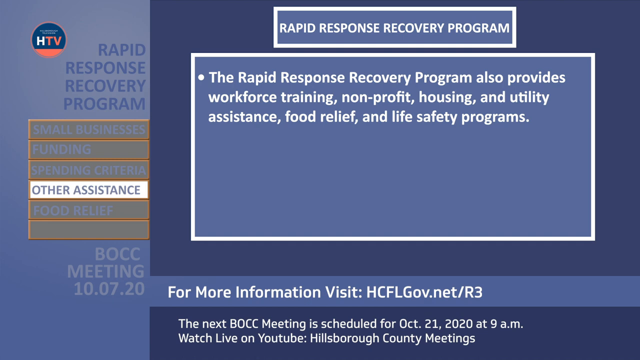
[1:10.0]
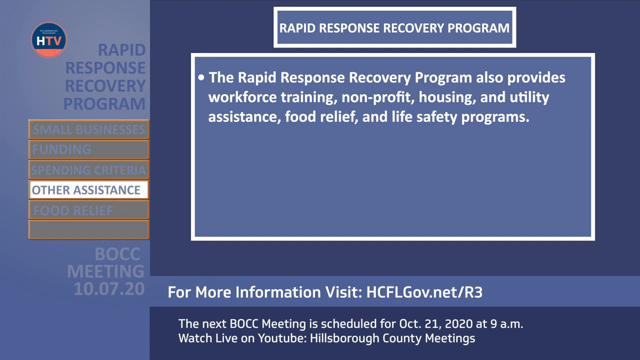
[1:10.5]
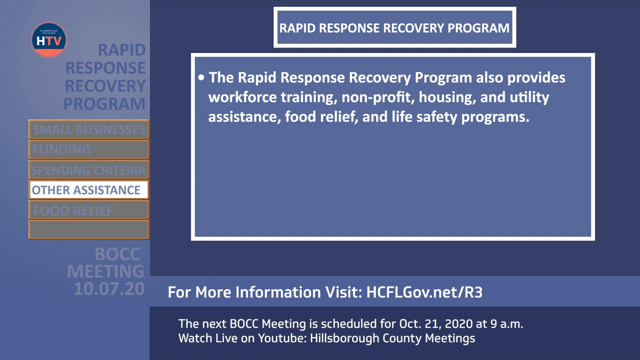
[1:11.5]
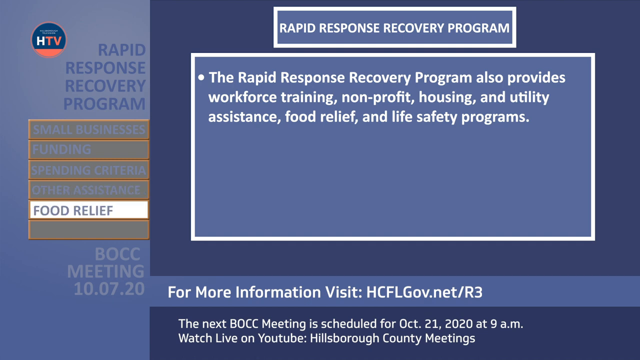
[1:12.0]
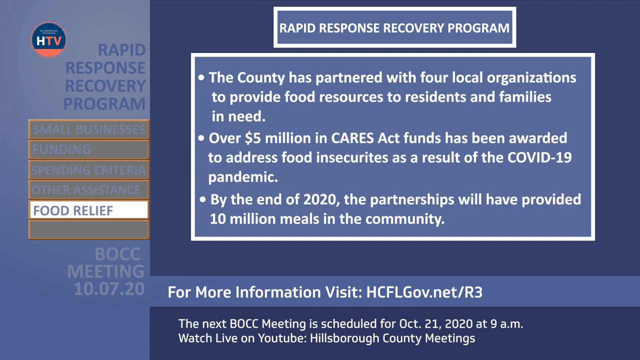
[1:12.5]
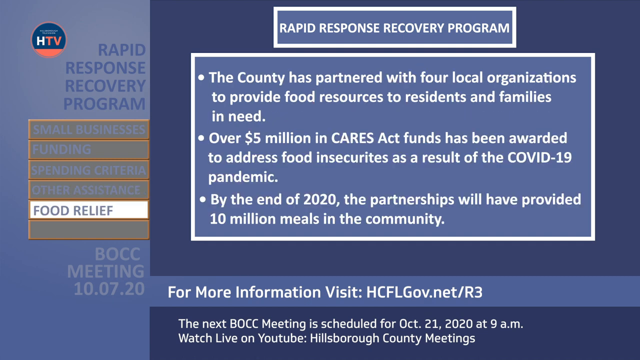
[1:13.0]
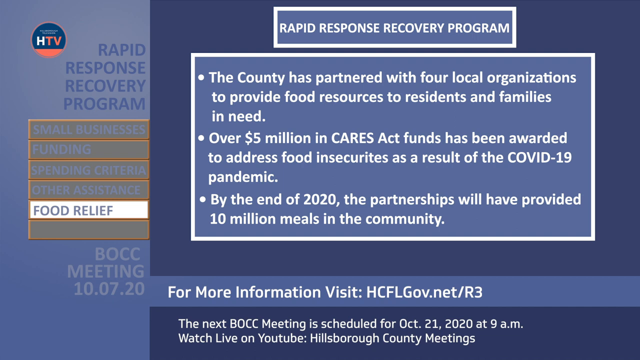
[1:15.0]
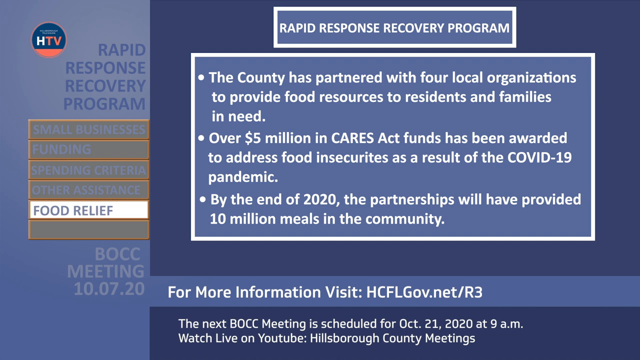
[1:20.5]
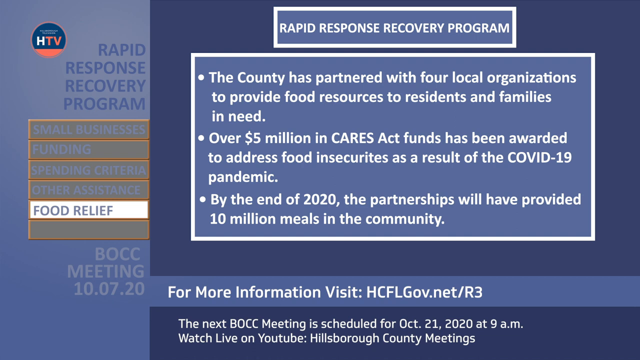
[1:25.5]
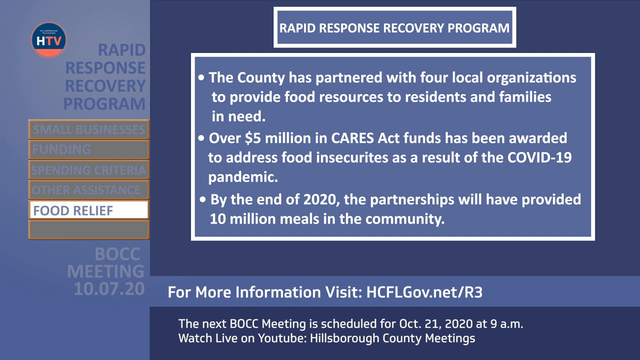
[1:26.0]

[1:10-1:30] The highlighted section on the left changes from other assistance to food relief, moving down the list. At the top right, the same title says "Rapid Response Recovery Program" in a blue box with a white border. Below it are three bullet points in white lettering: "the county has partnered with four local organizations to provide food sources to residents and families in need", "over $5 million in CARES Act funds have been awarded to address food insecurities as a result of the COVID-19 pandemic", and "by the end of 2020, the partnerships will have provided 10 million meals in the community." Someone is possibly talking over these points. Graphics at the bottom and on the left show the current meeting, a website for more information, and information on the next VOCC meeting, which looks to be October 21st, 2020 at 9 a.m., and that it can be watched on YouTube.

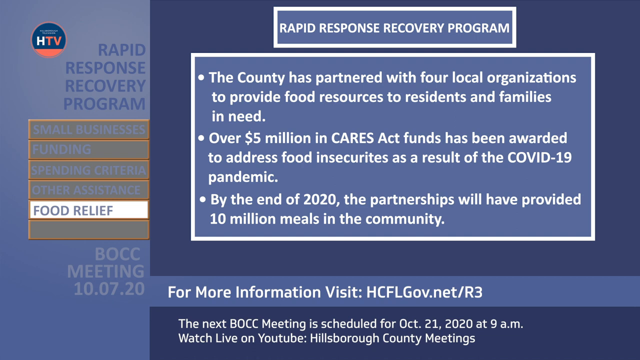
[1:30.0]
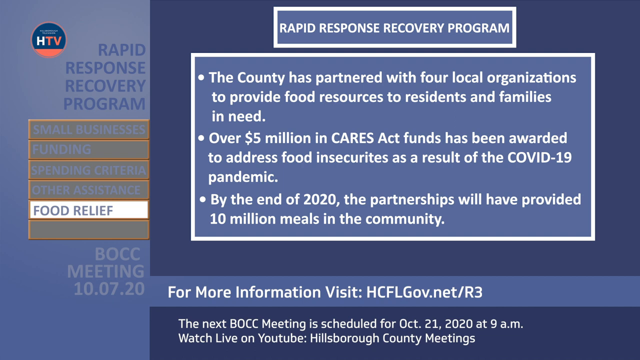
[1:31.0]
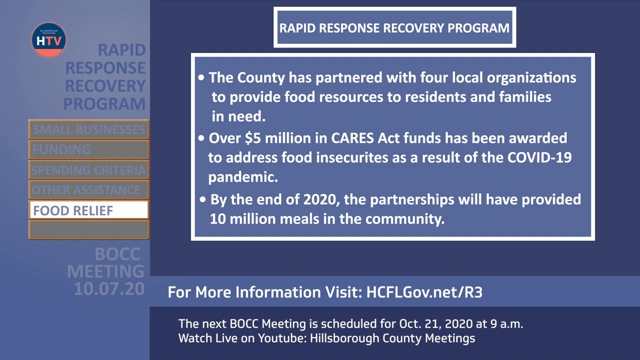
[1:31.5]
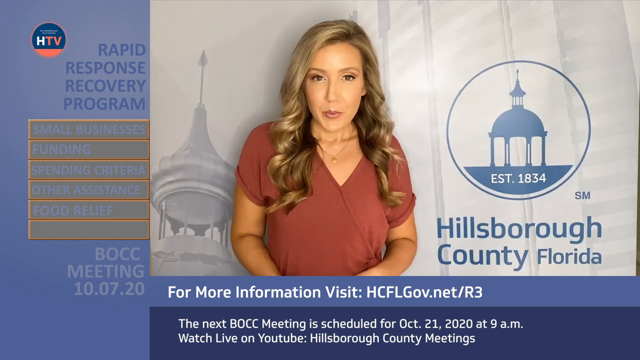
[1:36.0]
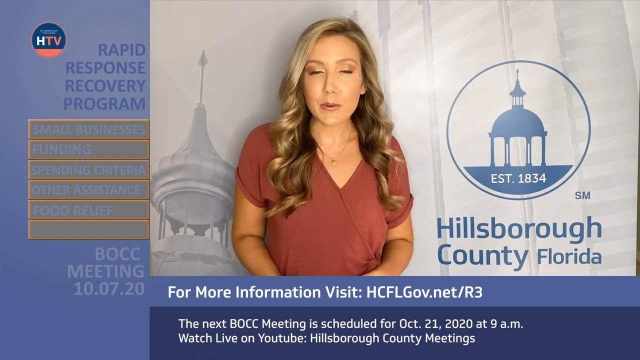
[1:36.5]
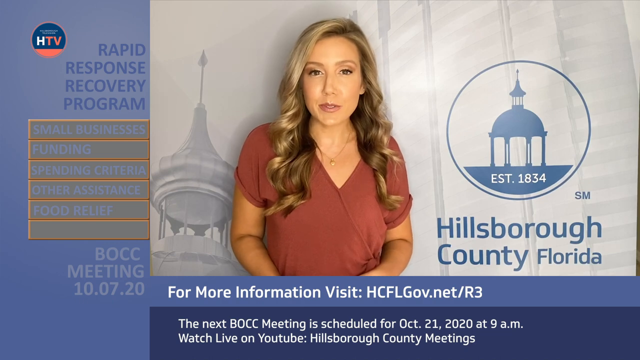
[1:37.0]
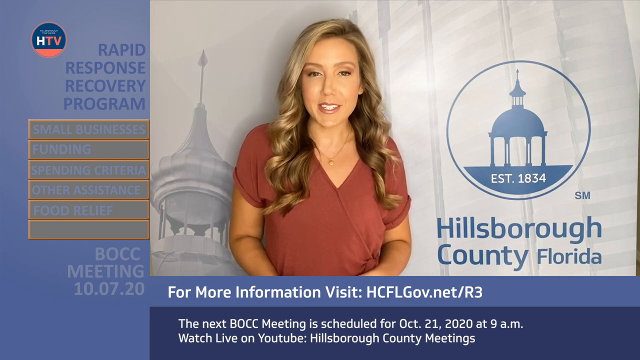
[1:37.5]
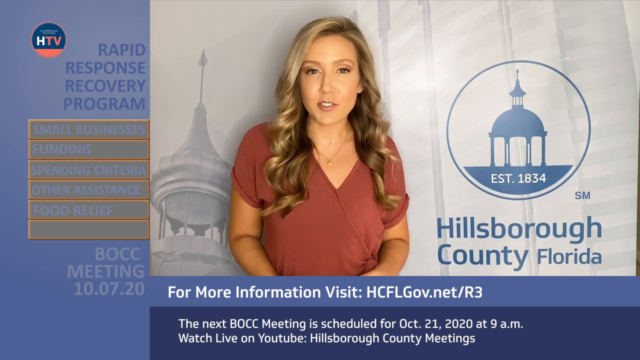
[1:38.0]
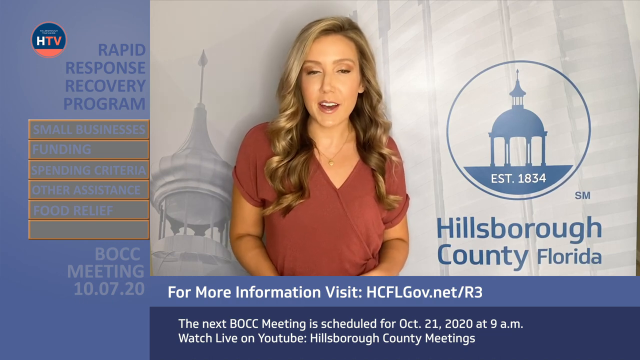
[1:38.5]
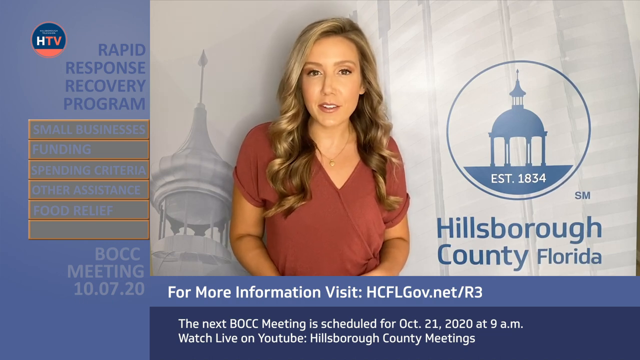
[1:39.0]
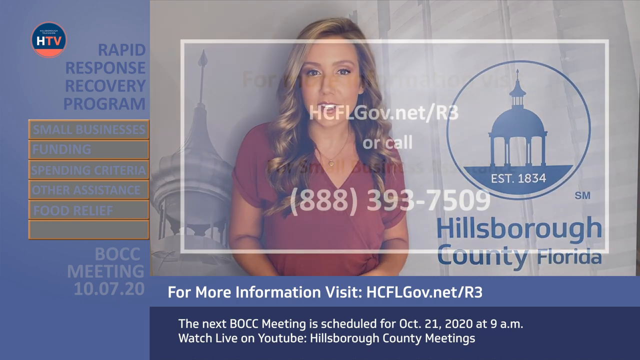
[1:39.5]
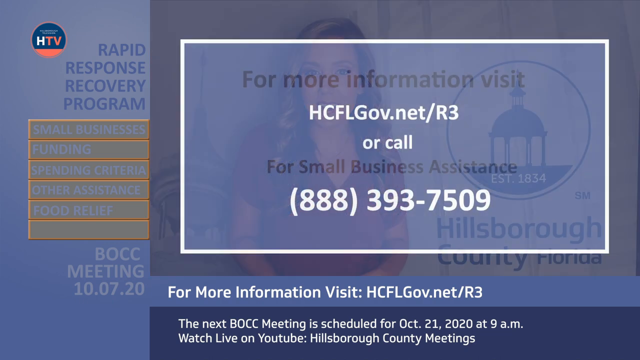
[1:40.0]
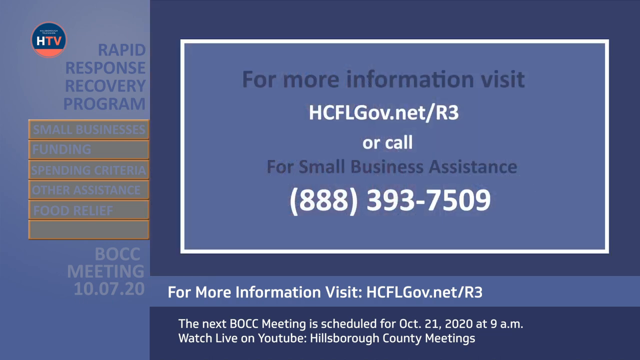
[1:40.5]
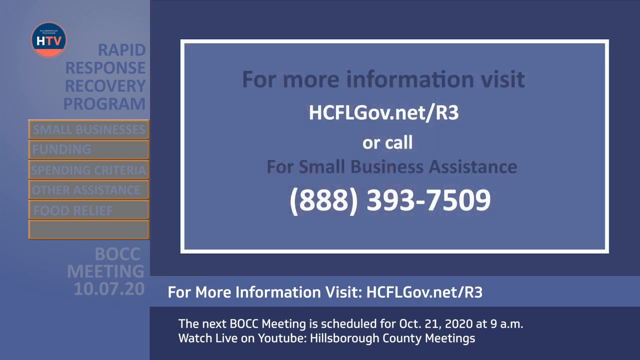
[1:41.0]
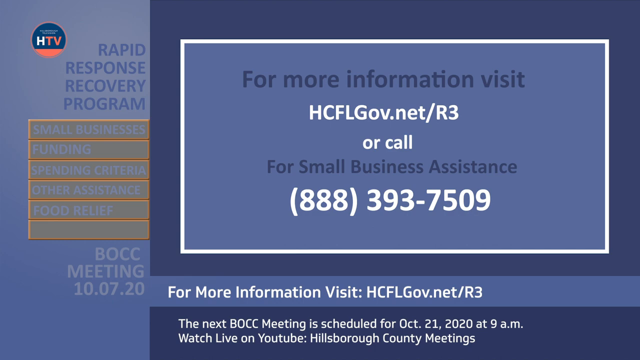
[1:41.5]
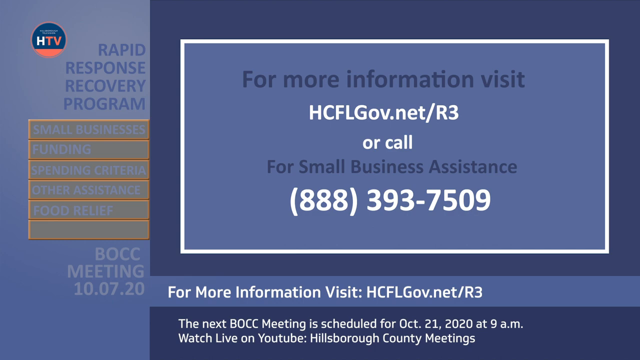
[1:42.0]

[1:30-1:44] The food relief slide is shown, and after five or six seconds the video goes back to the woman seen speaking before, with the Hillsborough County, Florida logo to her right. She wears some type of reddish-brown professional dress with a necklace, has kind of blonde or brown hair, and looks a little tan. The left side shows the Rapid Response Recovery Program and the various rows that were covered, and information about the website appears below. For the last couple of seconds, a screen shows how to access more information: a lighter blue rectangular call-out with a white border, darker blue text at the top saying "for more information, visit", then in white "hcflgov.net/R3 or call". Below, in darker blue lettering, it says "for small business assistance" followed by the phone number "888-393-7509".